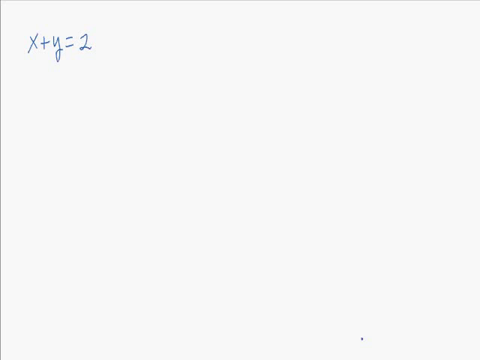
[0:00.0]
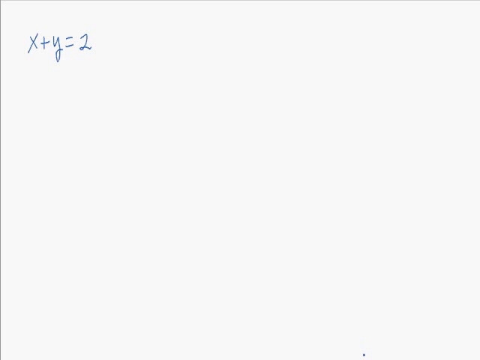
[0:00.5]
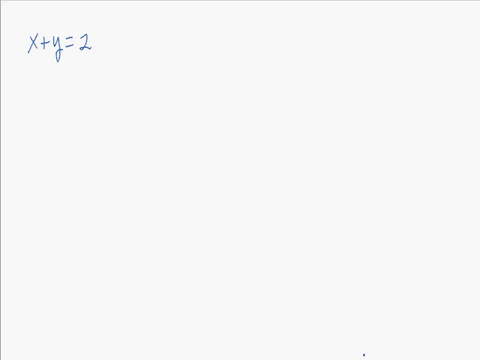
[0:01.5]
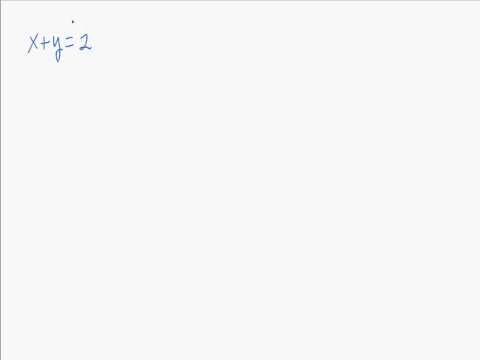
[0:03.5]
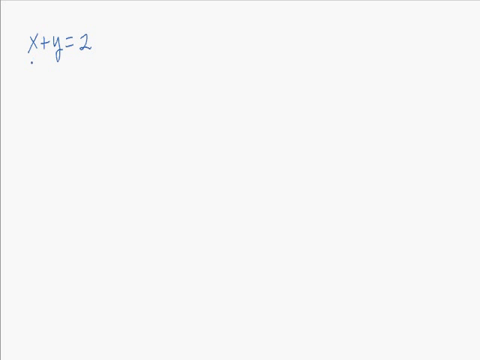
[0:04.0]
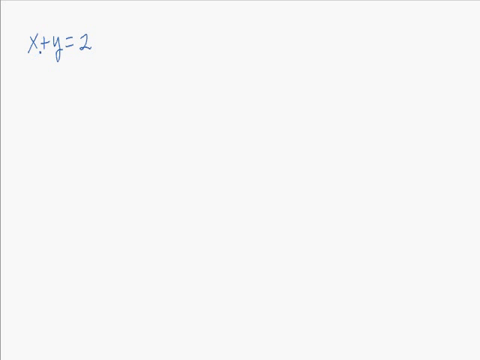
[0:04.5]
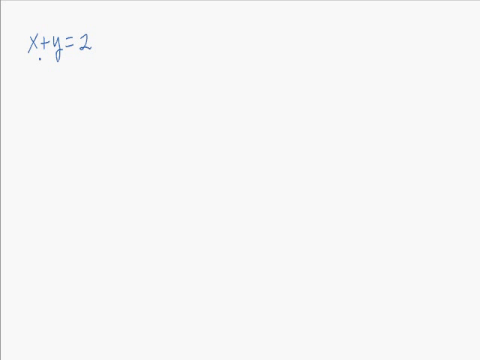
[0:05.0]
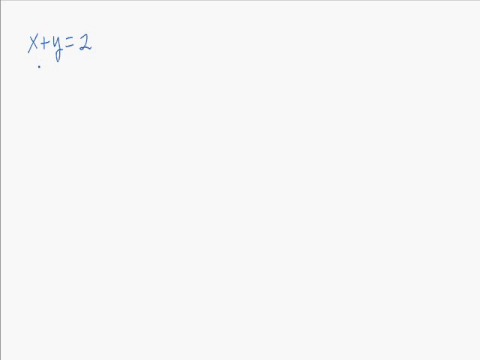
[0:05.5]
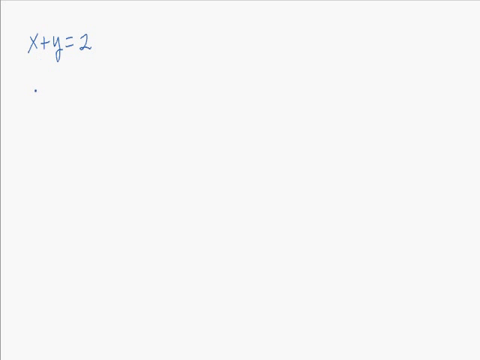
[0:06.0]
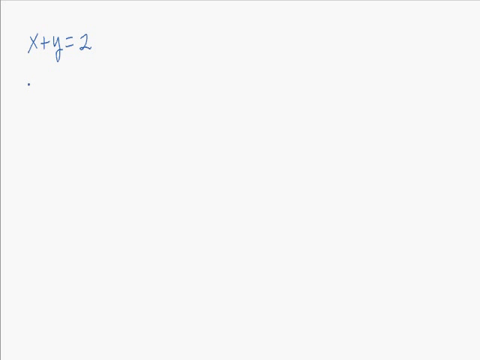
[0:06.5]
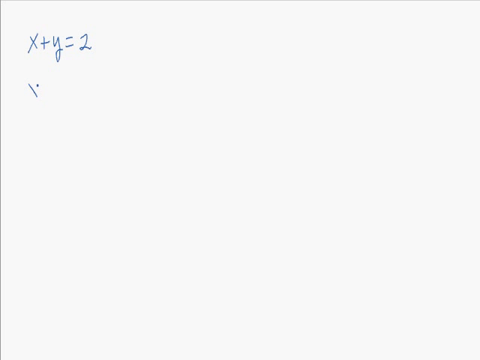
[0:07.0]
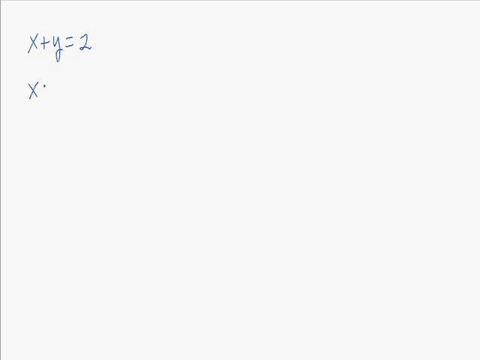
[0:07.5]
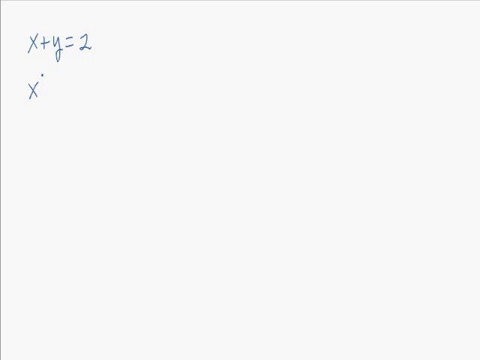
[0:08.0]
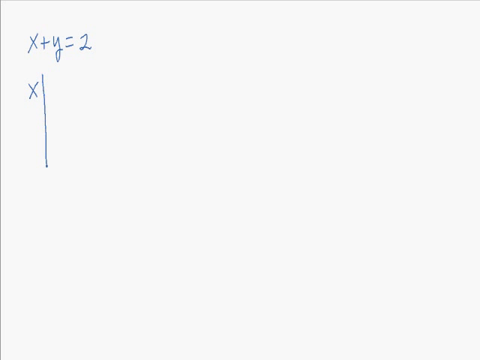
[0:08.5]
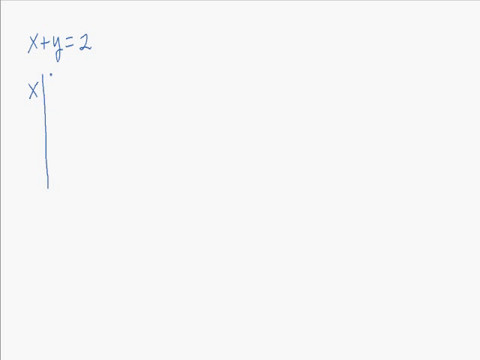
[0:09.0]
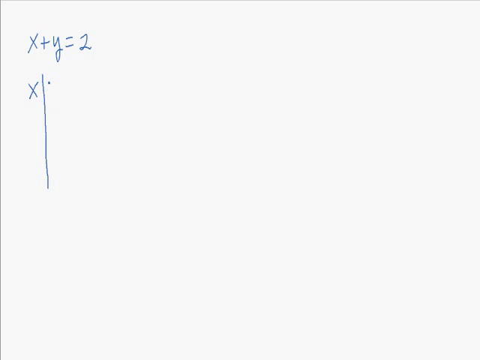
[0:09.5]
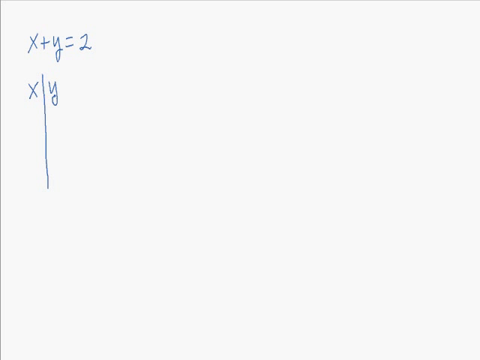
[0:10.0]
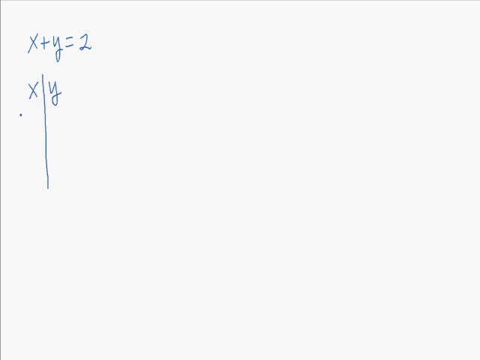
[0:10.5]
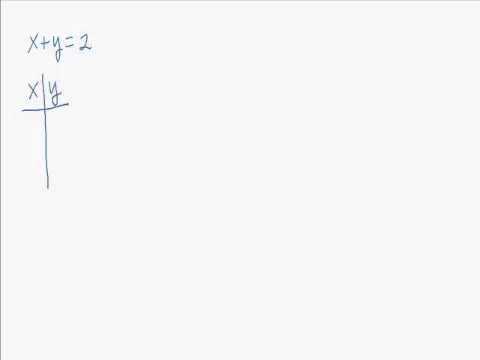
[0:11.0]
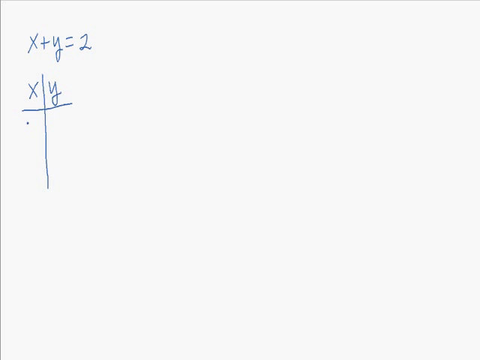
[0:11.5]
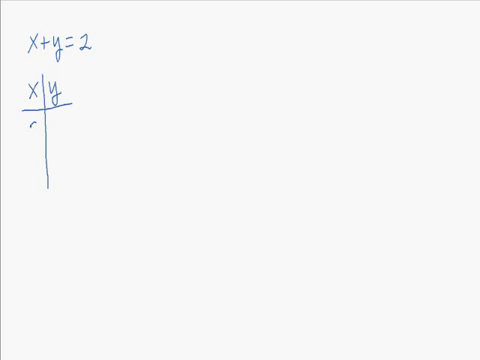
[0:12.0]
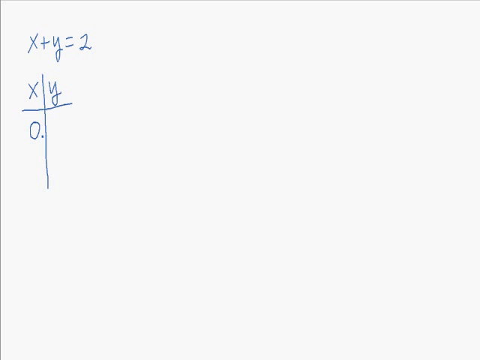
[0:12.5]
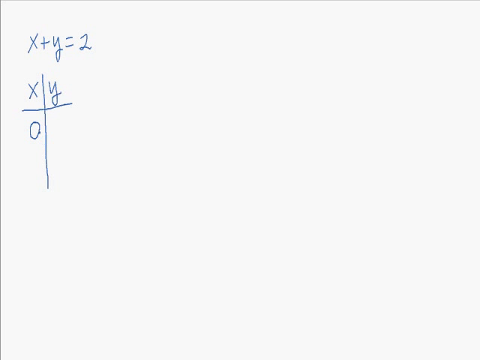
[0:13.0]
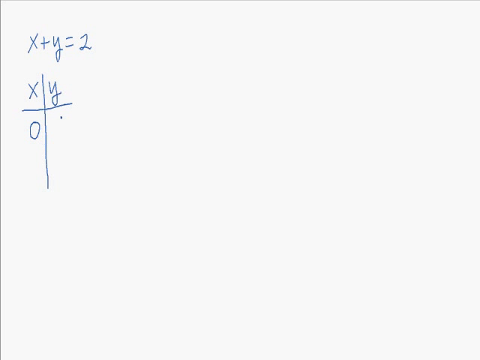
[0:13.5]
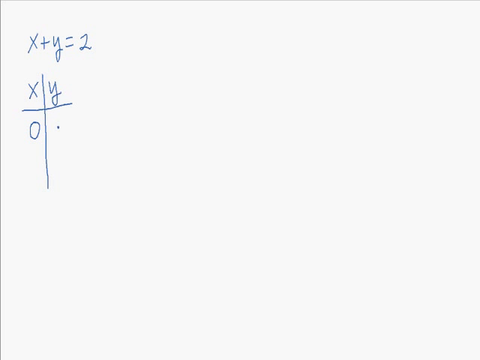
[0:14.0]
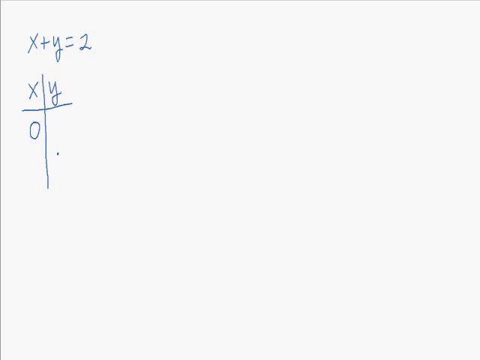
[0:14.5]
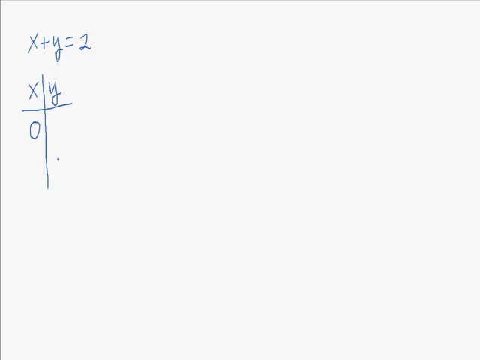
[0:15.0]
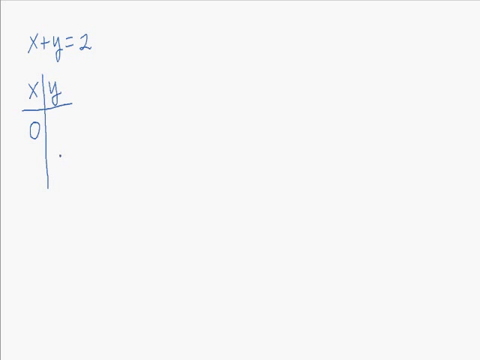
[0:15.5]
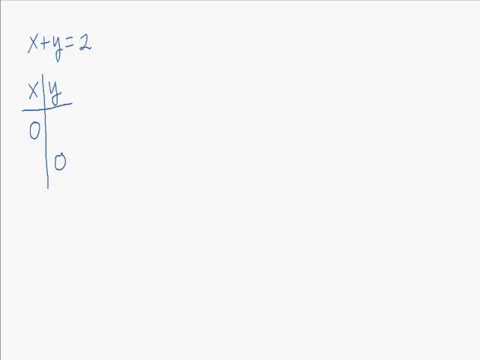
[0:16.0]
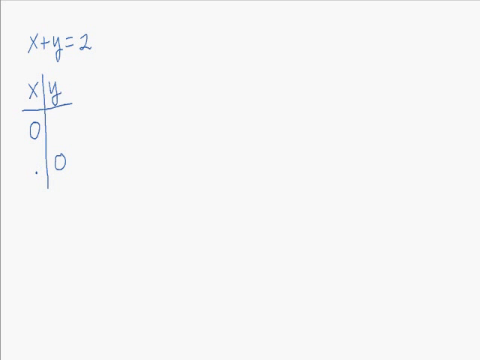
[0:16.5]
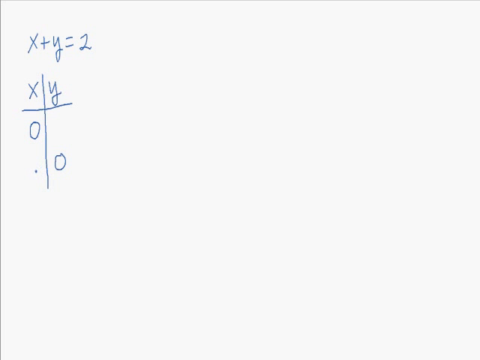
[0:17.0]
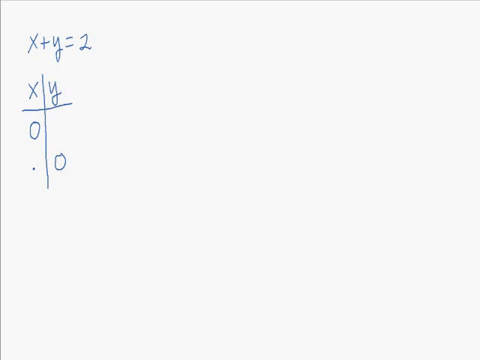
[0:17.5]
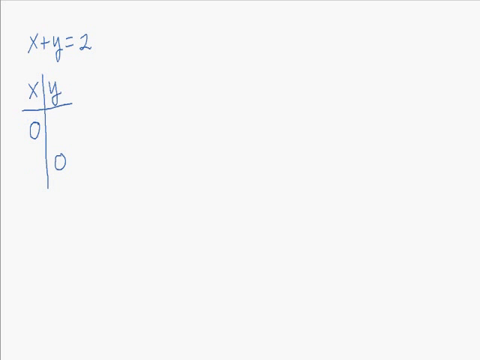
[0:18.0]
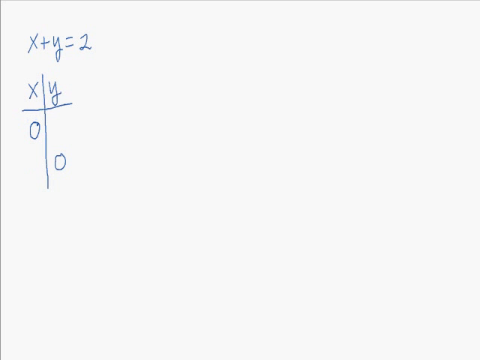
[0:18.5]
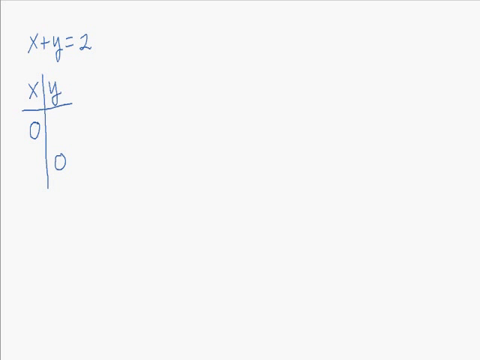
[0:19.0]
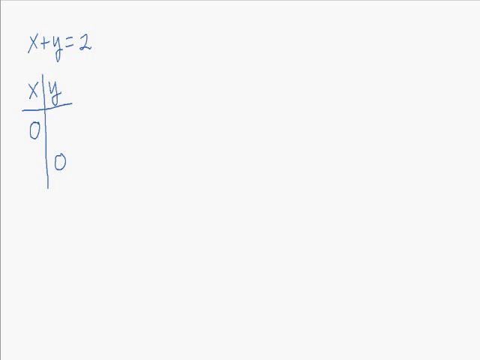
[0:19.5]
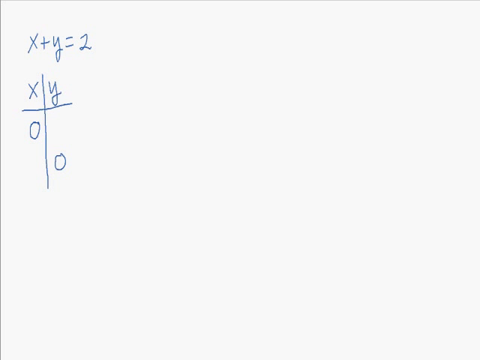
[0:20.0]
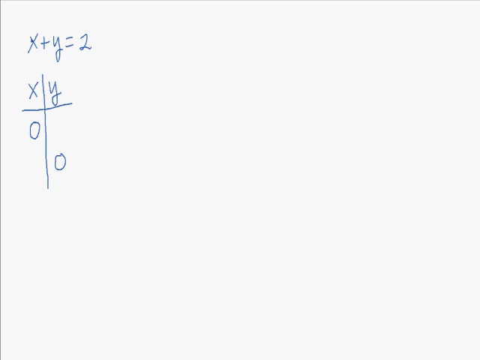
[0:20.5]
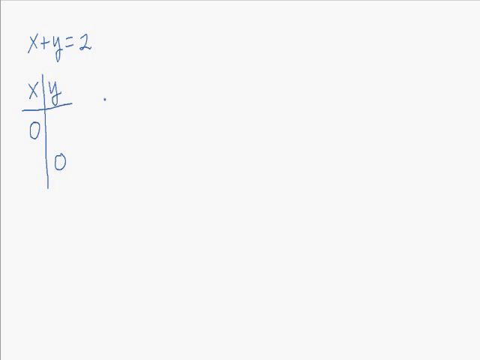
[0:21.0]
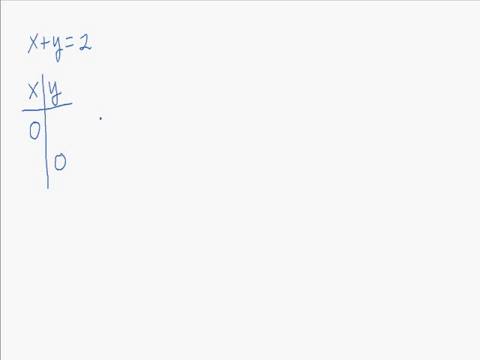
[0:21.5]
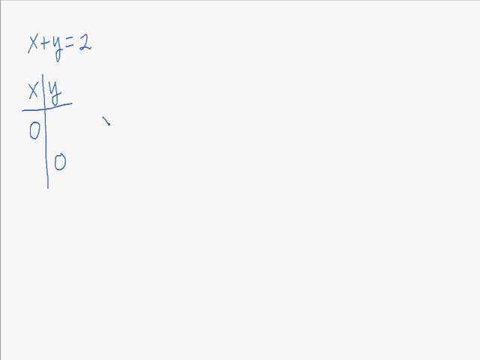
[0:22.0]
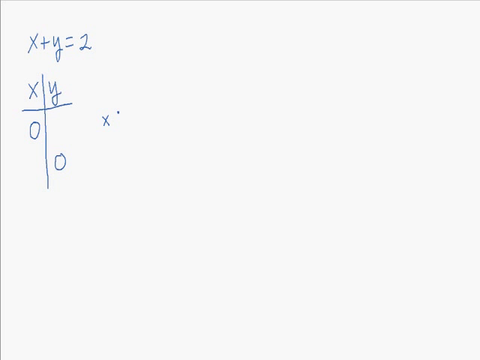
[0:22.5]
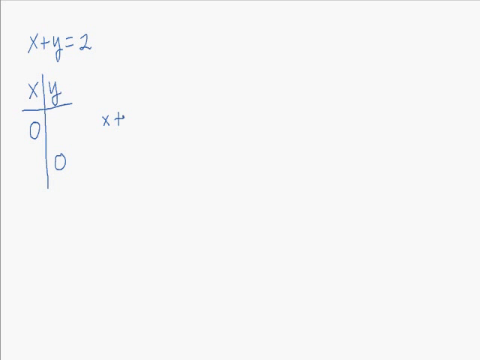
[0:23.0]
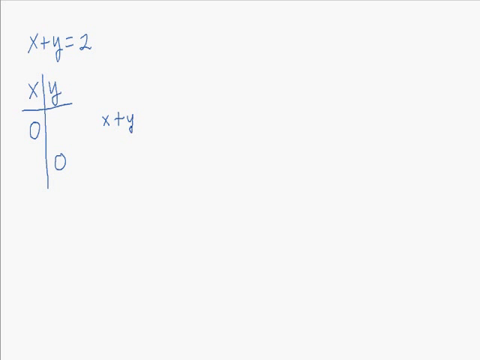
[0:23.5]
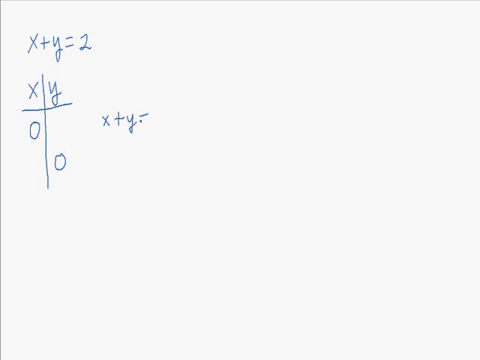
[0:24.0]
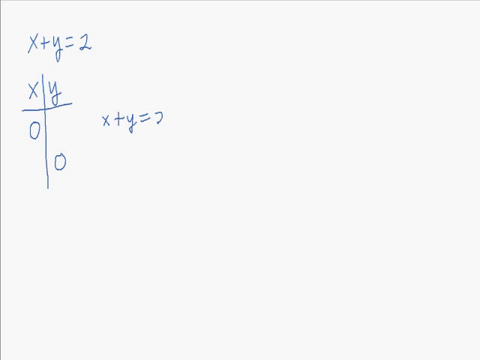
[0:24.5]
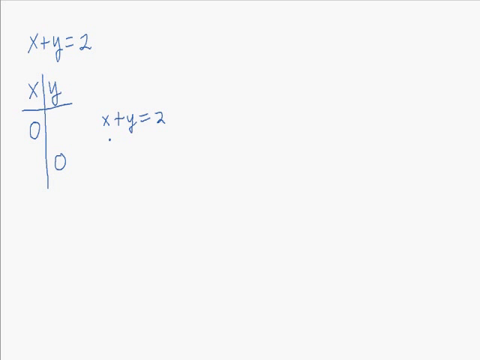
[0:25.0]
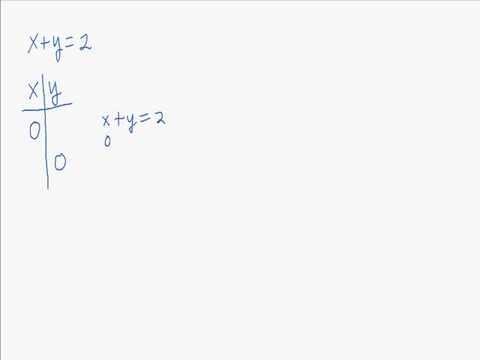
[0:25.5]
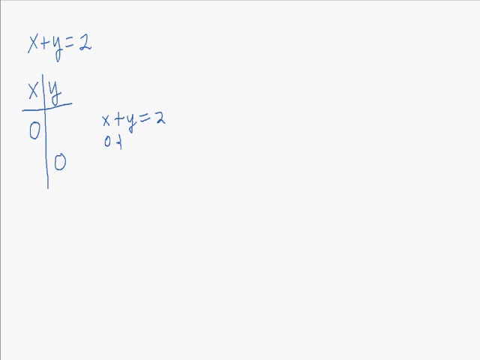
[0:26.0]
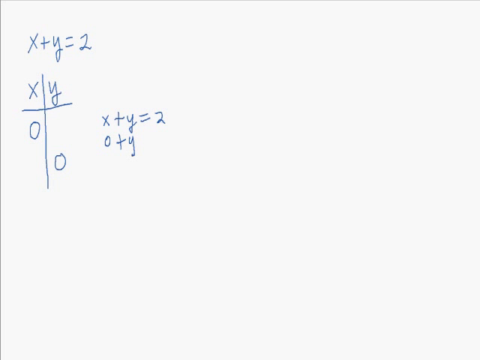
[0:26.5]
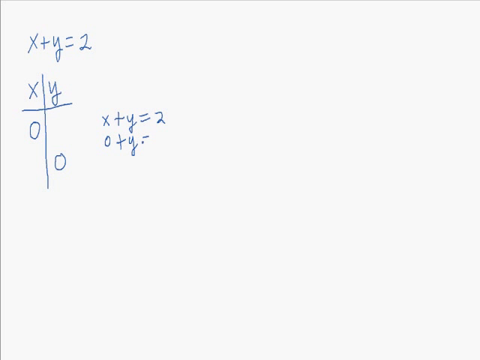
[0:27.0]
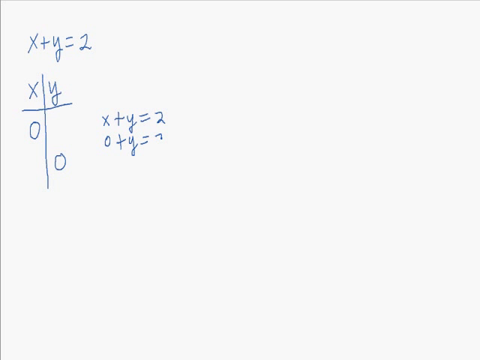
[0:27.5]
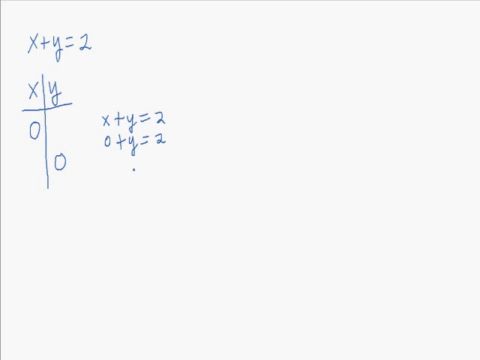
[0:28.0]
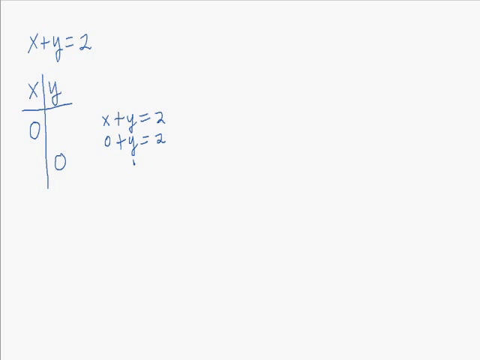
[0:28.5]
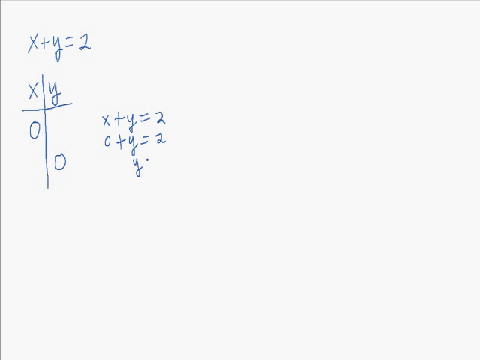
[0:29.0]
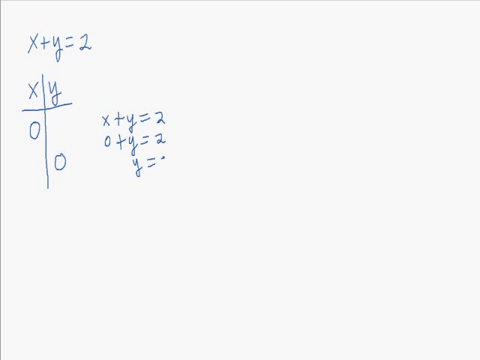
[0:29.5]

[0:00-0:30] On an all-white background, a blue pen appears only as a dot; no hand or pen is visible, but the writing appears in real time. In the upper left, "x + y = 2" is written in handwriting. A table is then created with x on the left side and y on the right side, split down the middle by a vertical line, with a horizontal line underlining the x and the y, forming two columns. A zero is drawn under the x, and another zero is drawn lower right under the y, so the two are not side by side; the y zero is lower. The dot then moves to the right of the table and writes "x + y = 2", underneath that "0 + y = 2", and then "y = 2". All of this is in the top left quadrant on the white background. Because it is handwritten, it is not perfectly straight or level and is a little sloppy.